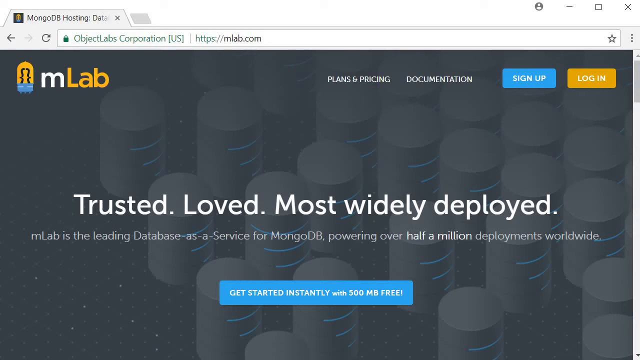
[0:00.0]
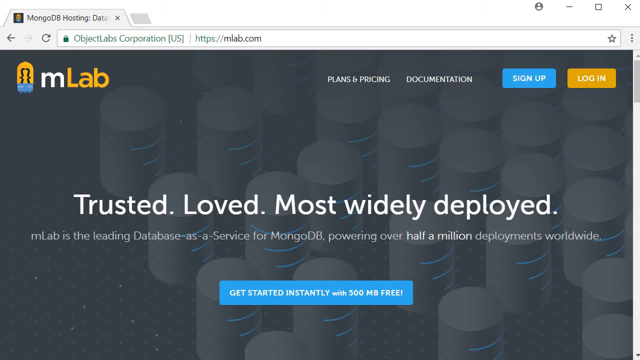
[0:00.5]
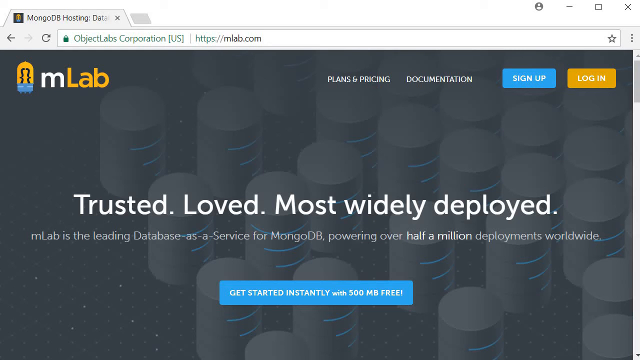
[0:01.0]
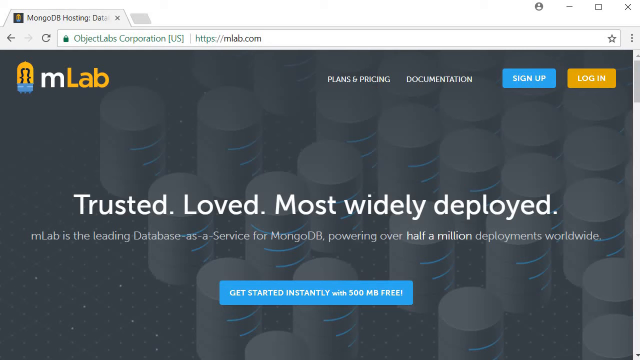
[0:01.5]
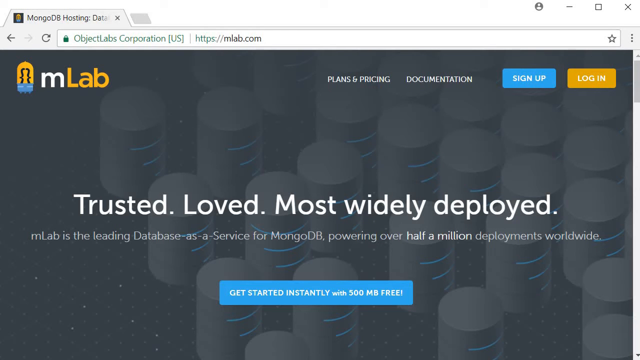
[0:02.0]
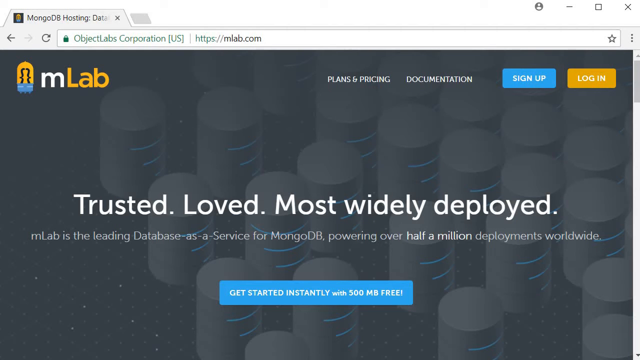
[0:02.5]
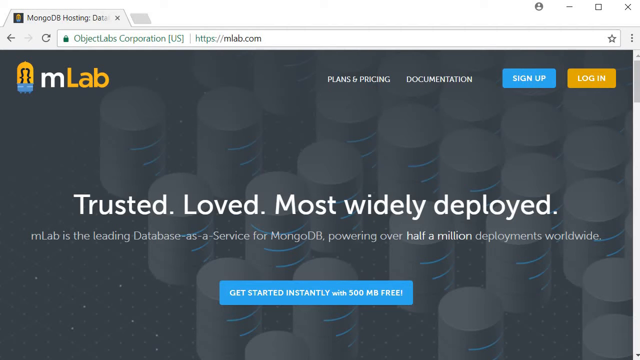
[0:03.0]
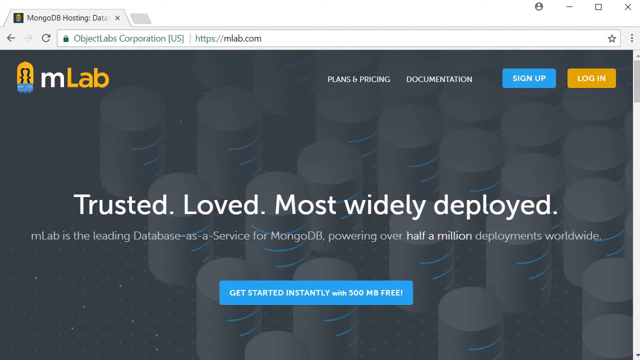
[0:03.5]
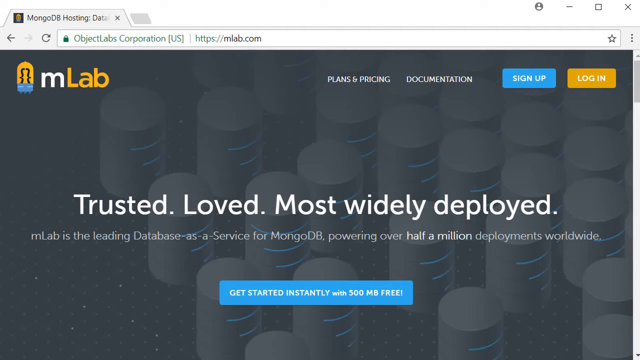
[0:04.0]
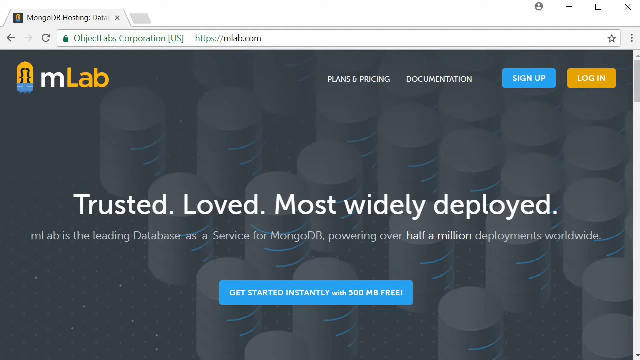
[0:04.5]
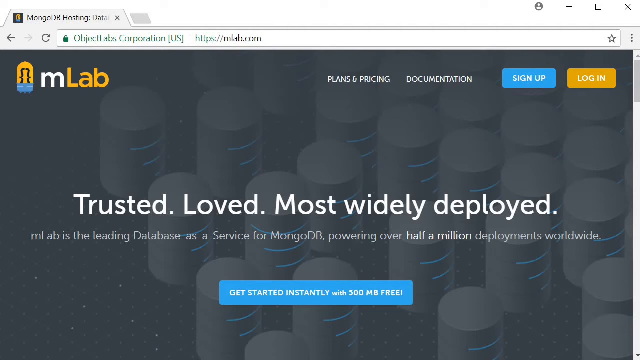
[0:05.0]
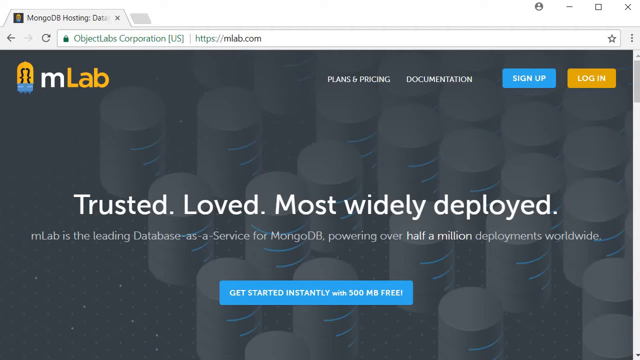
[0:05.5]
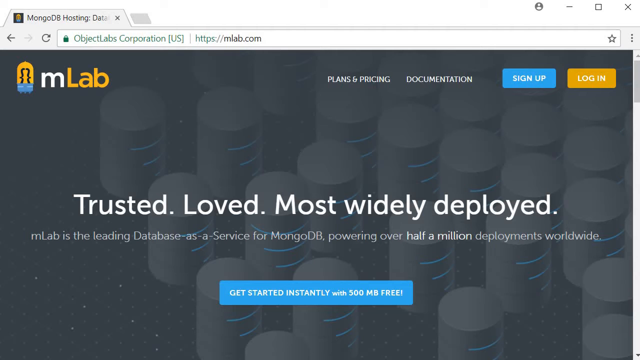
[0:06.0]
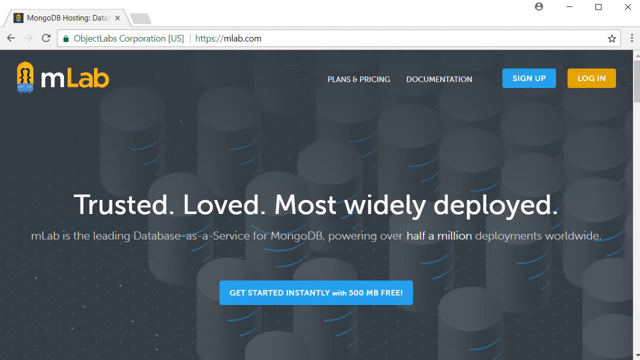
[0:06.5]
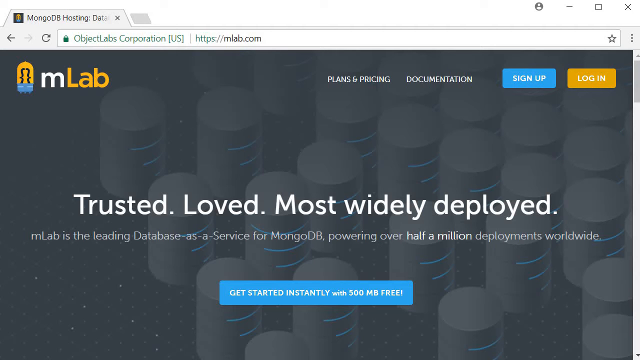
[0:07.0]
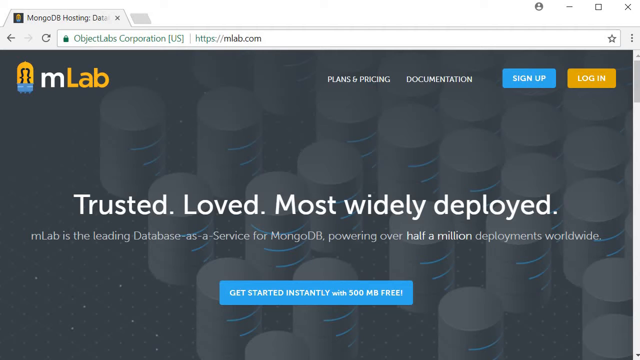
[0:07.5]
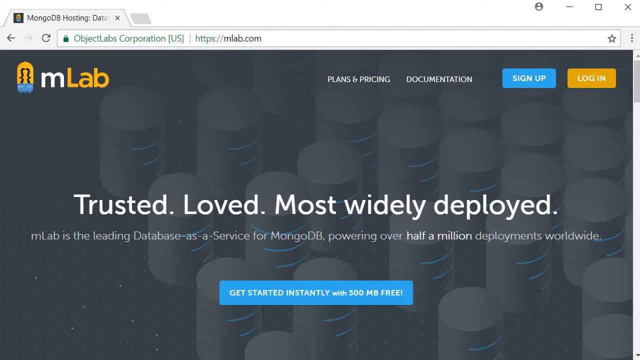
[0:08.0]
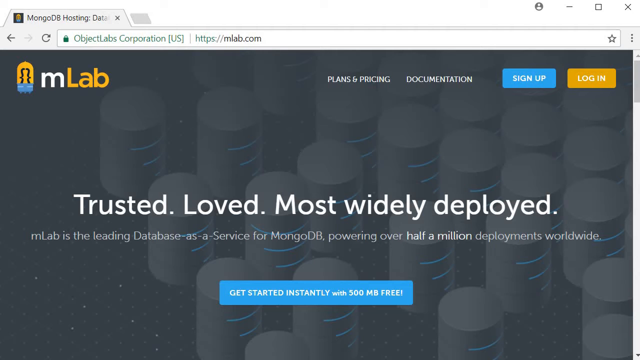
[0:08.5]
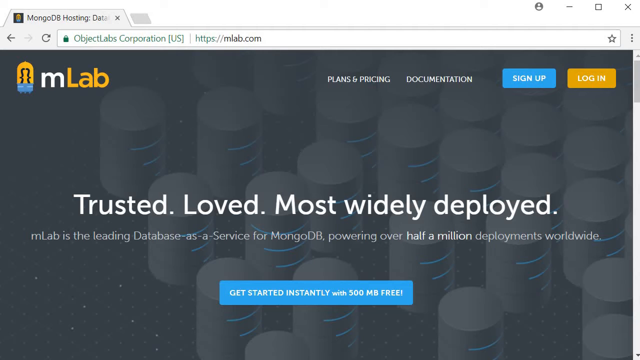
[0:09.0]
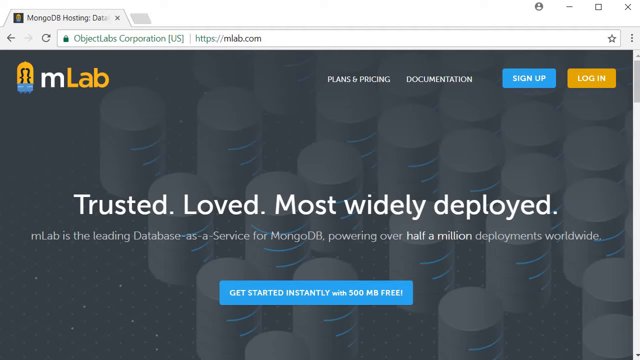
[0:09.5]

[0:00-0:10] A computer shows a browser window open on a single web page with only one tab. The gray tab at the top reads "MongoDB Hosting". Underneath it, a white address bar reads "OpticLabs Corporation [US] HTTPS://MLab.com." The web page has a dark gray background with faded, lighter gray cylinders distributed at random, each with thin blue lines on it. In the middle of the screen, white text reads "Trusted, Loved, Most Widely Deployed." Beneath that, smaller light gray text reads "MLab is the leading database as a service for MongoDB powering over half a million deployments worldwide." Below this is a blue button with white letters reading "Get Started Instantly with free 500 MB free." In the upper left corner is the MLab logo: a white lowercase m, then a capital L "Lab" in yellow, with a stylized light bulb to the right of it.